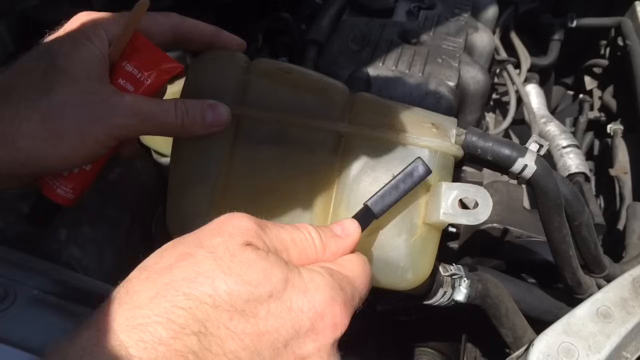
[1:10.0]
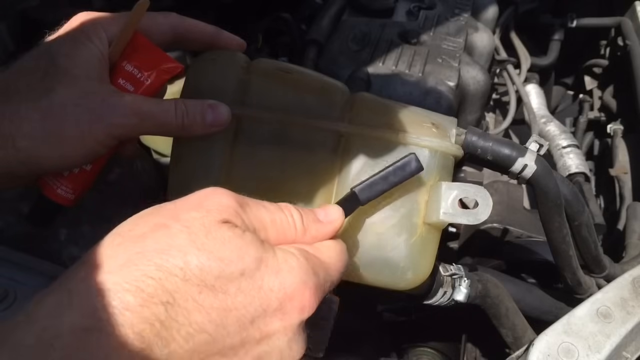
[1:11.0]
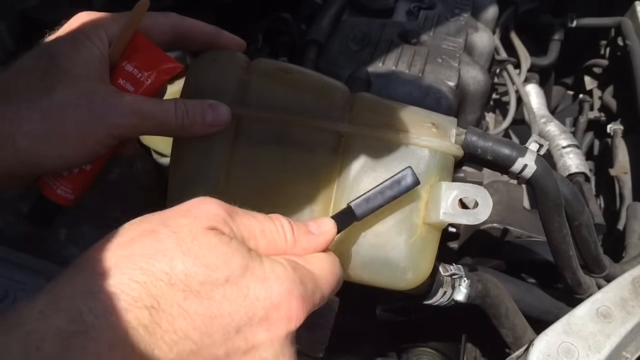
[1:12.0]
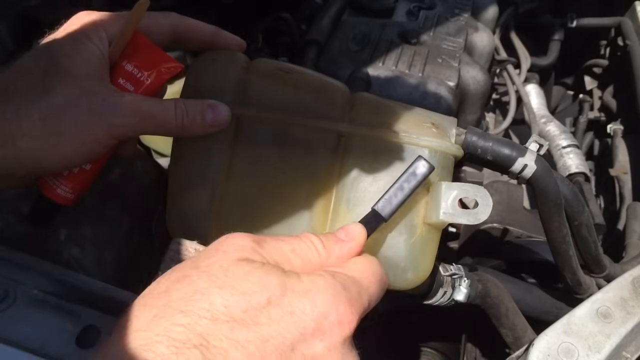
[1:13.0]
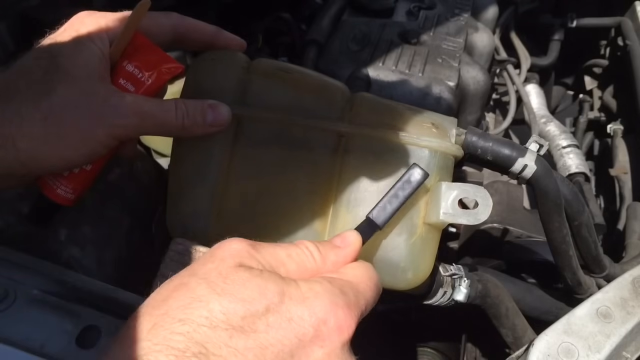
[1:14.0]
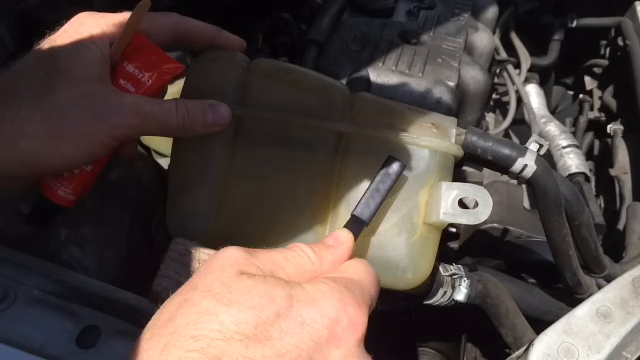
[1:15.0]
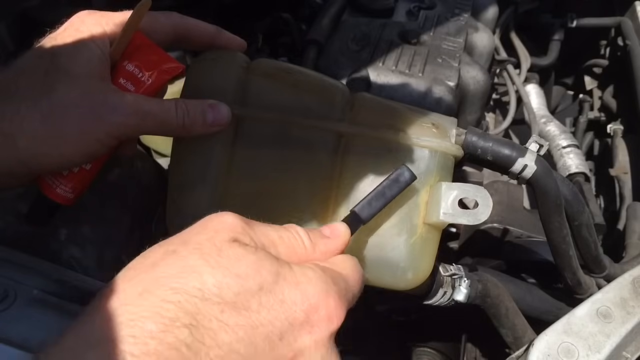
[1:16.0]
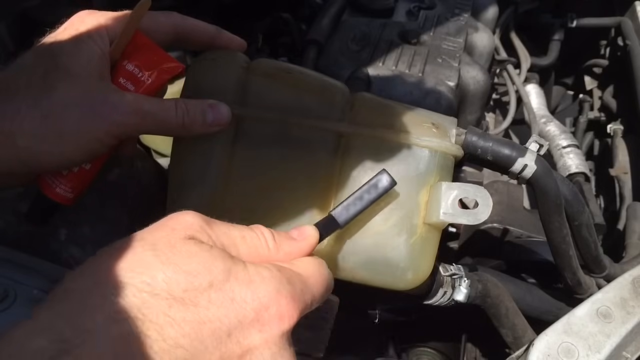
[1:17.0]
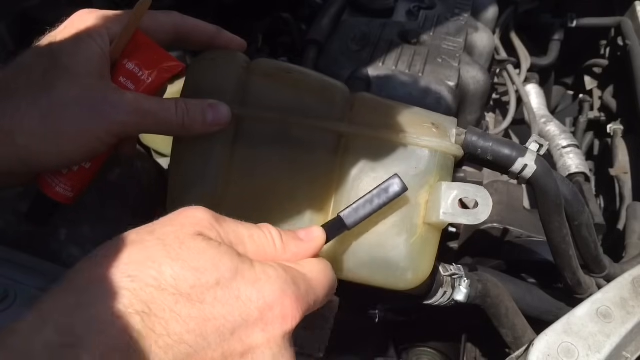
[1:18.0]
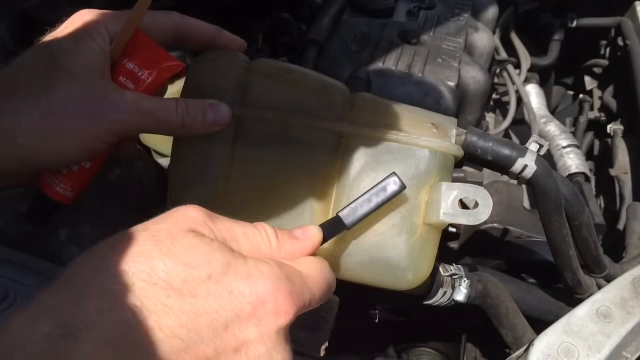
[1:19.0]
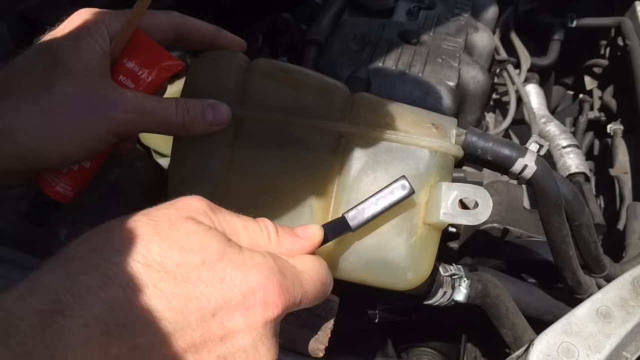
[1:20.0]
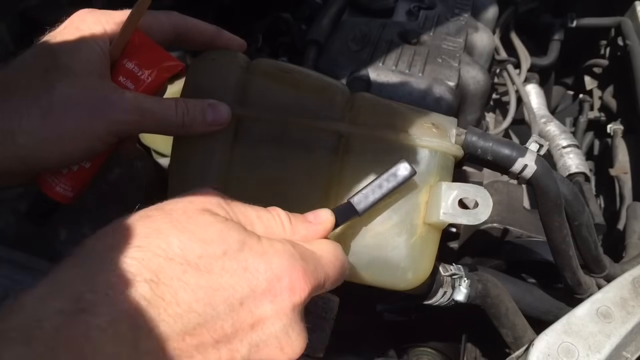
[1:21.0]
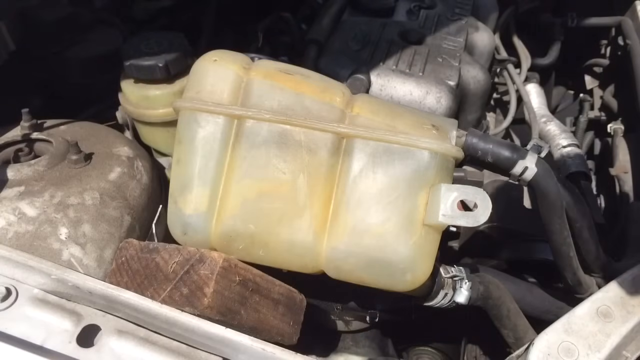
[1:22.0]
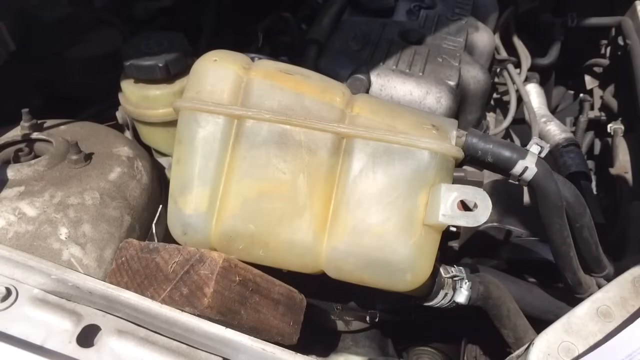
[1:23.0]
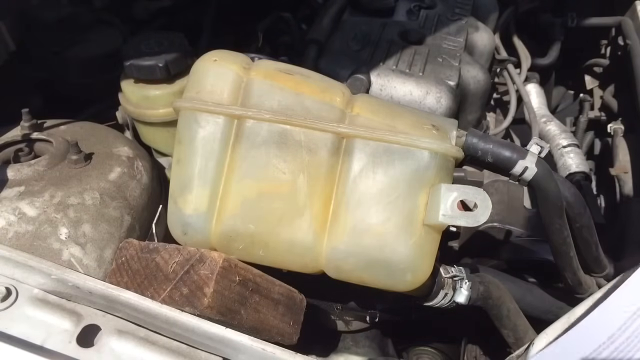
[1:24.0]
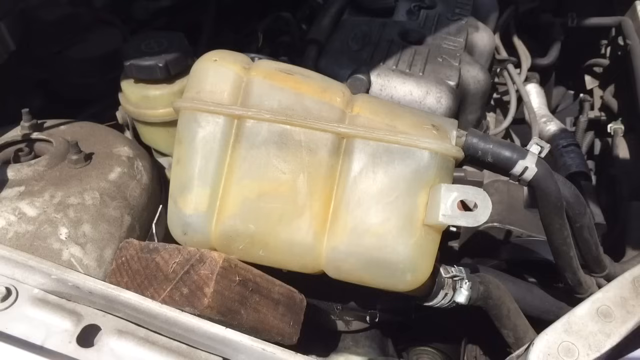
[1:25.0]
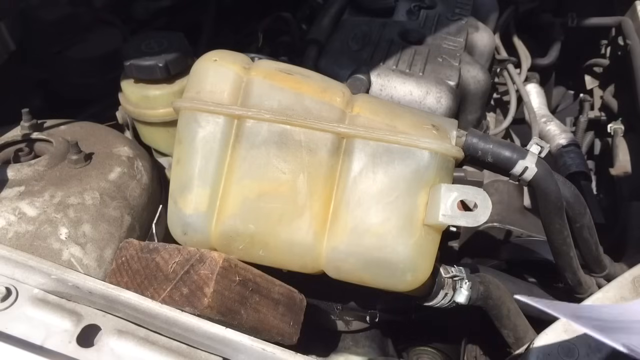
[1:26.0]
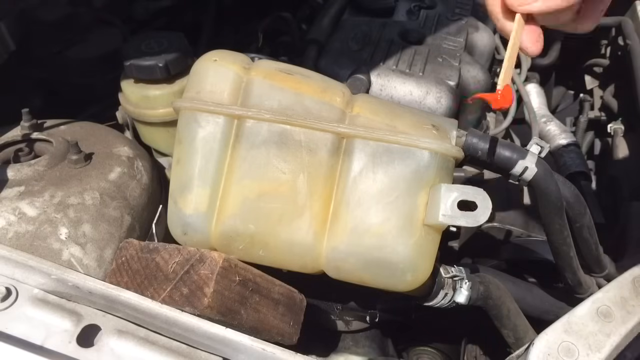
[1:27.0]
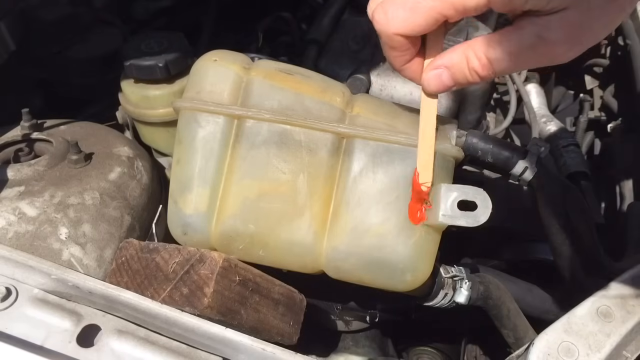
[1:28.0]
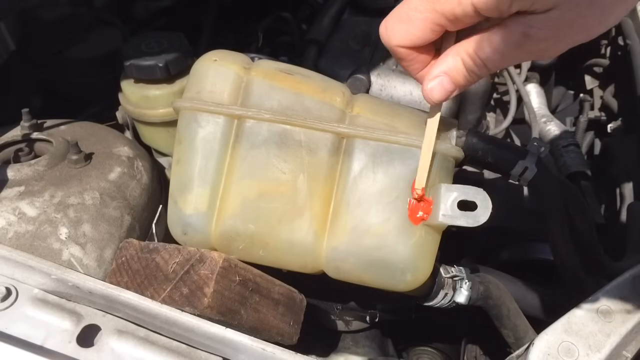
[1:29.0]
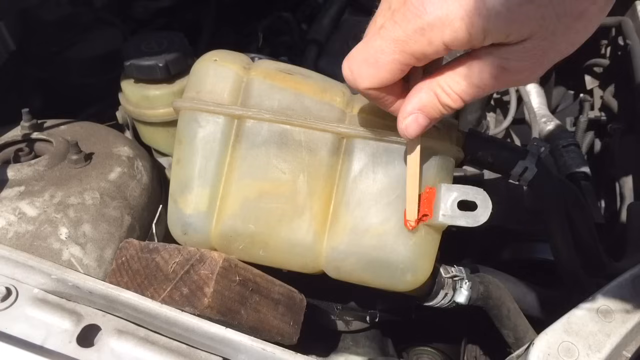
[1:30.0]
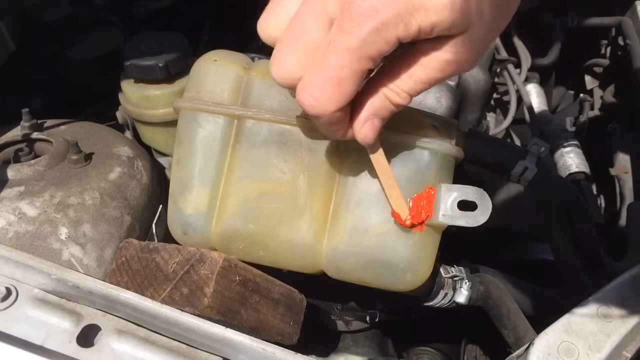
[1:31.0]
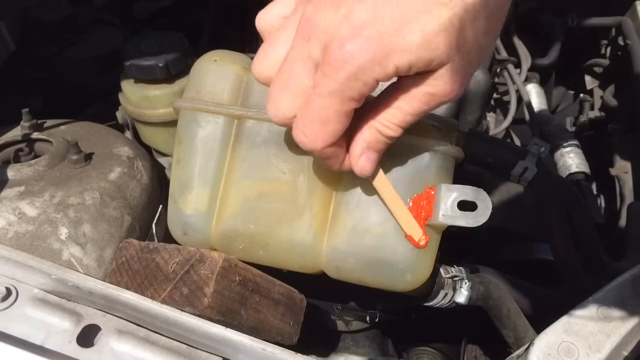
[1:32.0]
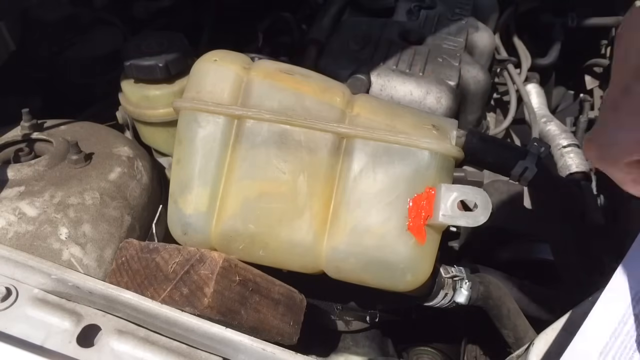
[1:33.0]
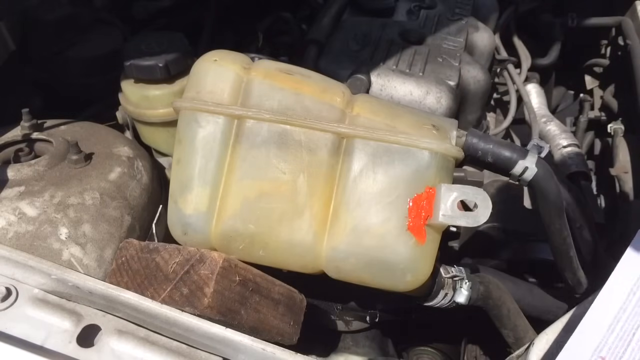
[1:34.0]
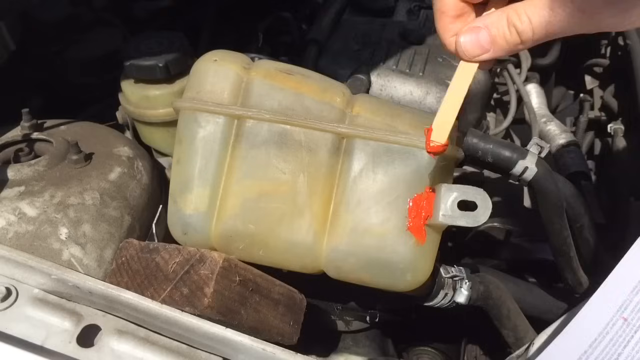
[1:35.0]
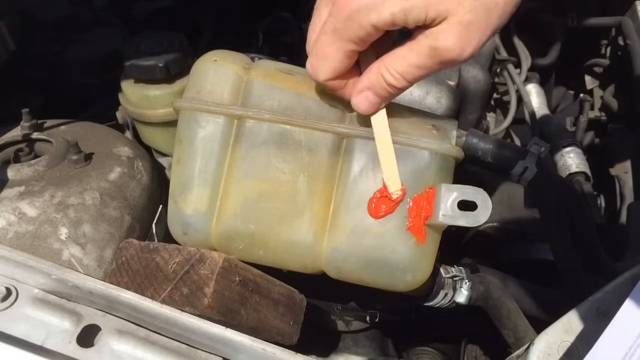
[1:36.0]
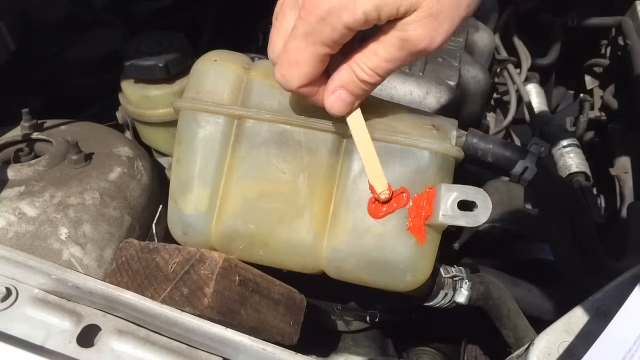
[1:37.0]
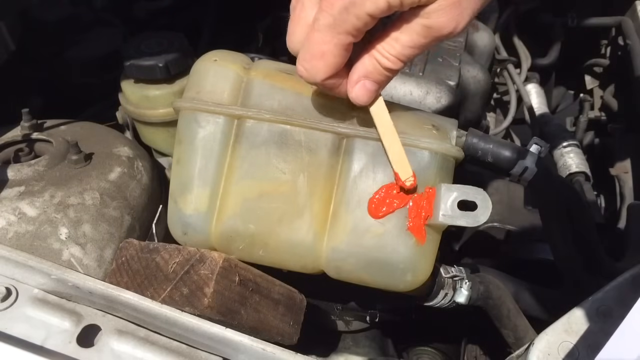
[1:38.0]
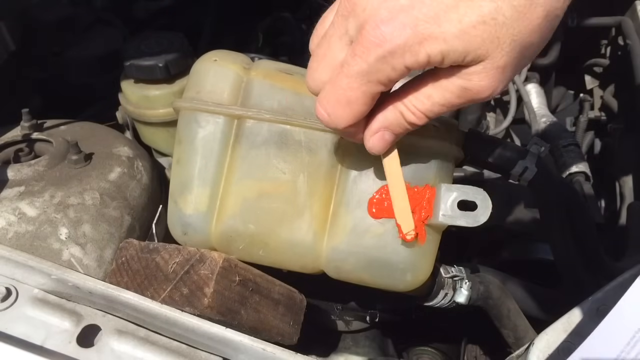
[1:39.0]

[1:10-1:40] A pair of Caucasian hands appears in front of a car engine; the car's hood has been opened and cannot be seen. The hands look like those of an adult, though not too old. The left hand holds a red tube of sealant with the cap on. The right hand uses a black wire bristle brush to clean the bottom right side of the coolant reservoir, a beige plastic, square-shaped object with a circular tag on the right side protruding from the rest of the tank. Black hoses and clamps connect the coolant tank to other parts of the engine. The person moves the brush in up-and-down motions, then side to side, then in circular motions, cleaning off the right side of the tank. After a transition, the person's shadow can be seen, and they hold a small light brown or beige stick similar to a popsicle stick, spreading an orange-ish red substance onto the right side corner of the coolant tank. It starts as a small dot and gets spread wider and wider.